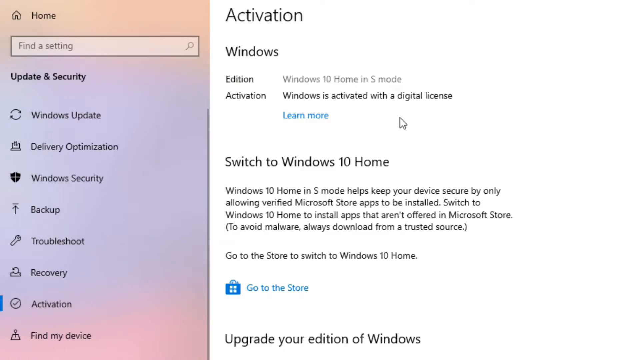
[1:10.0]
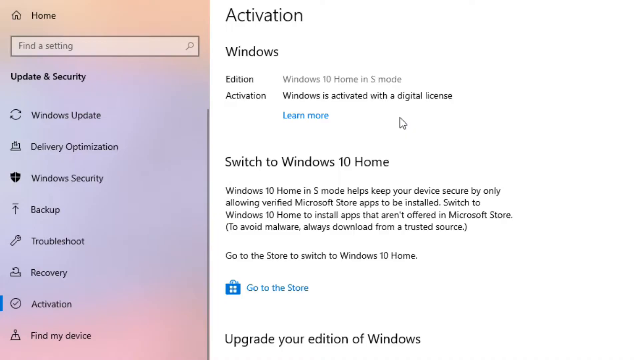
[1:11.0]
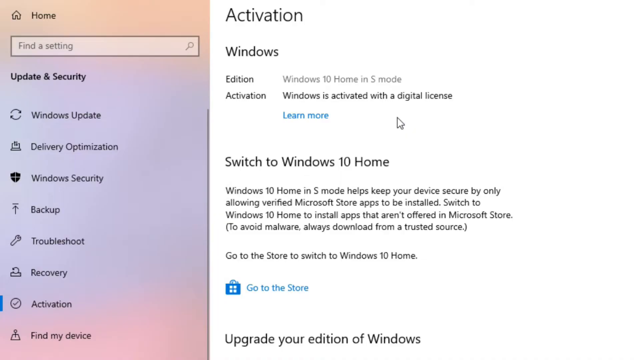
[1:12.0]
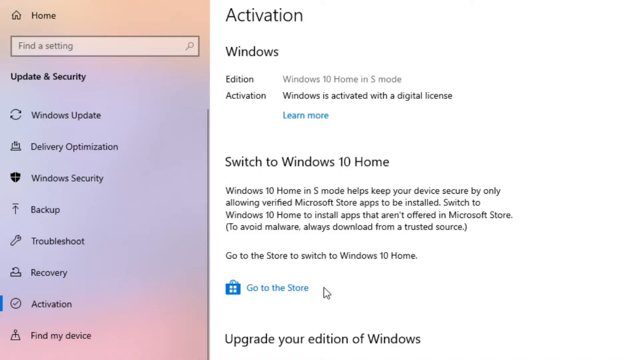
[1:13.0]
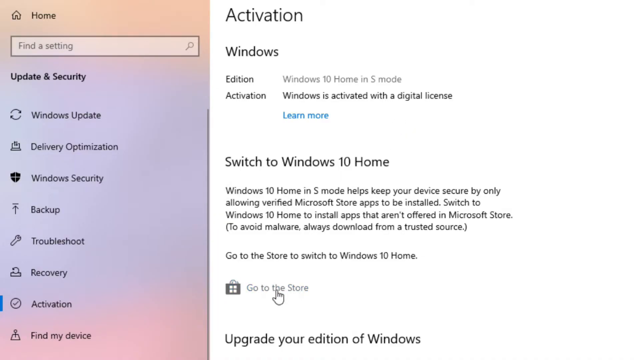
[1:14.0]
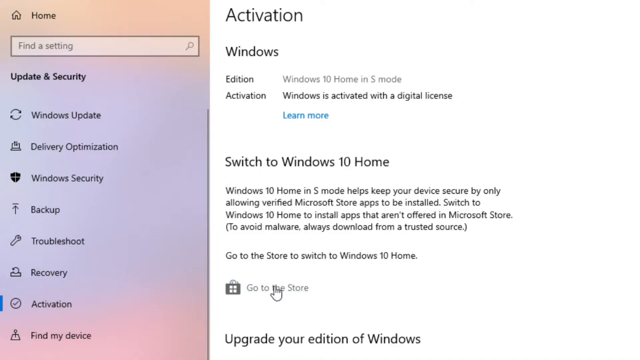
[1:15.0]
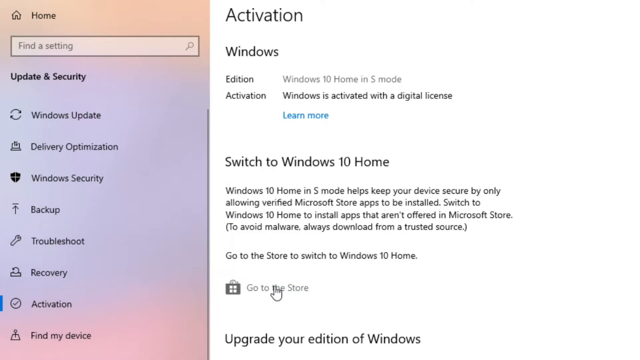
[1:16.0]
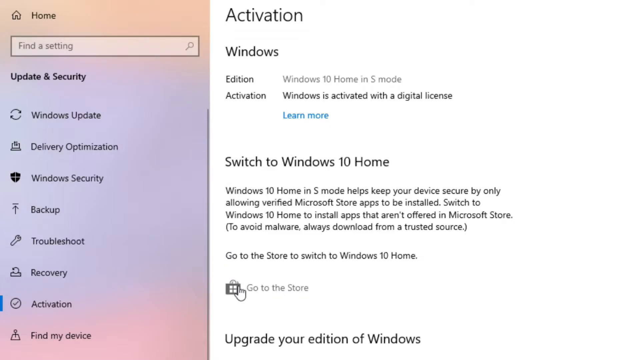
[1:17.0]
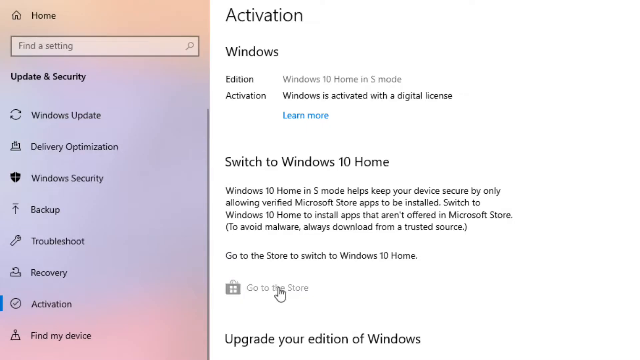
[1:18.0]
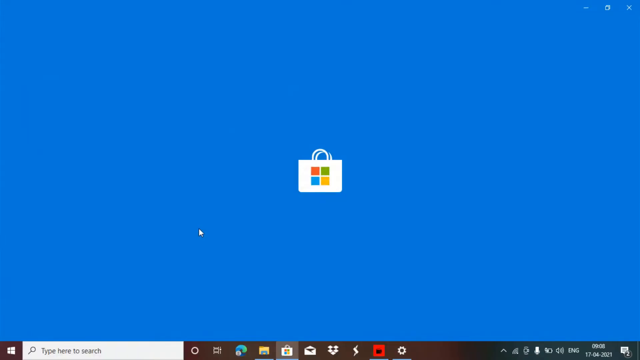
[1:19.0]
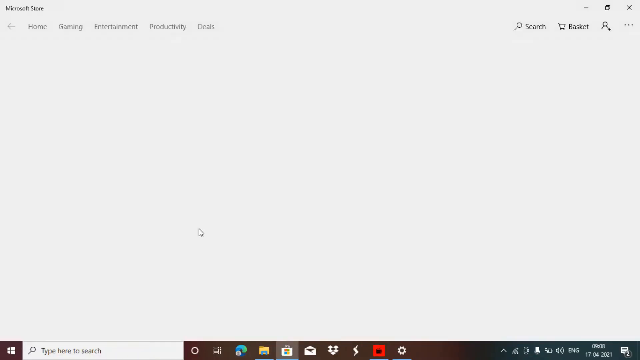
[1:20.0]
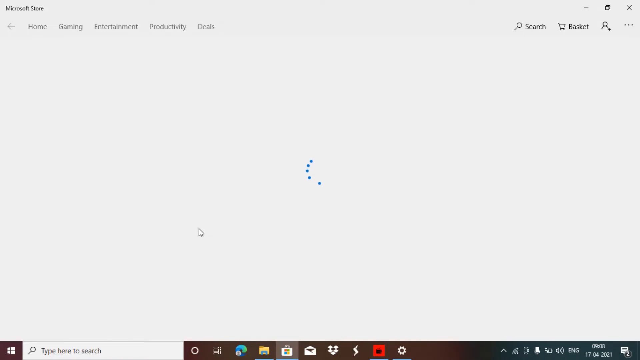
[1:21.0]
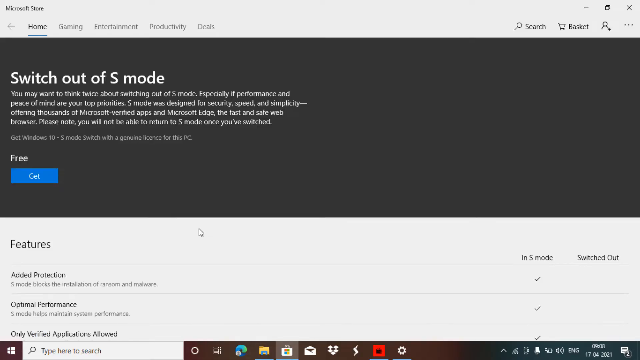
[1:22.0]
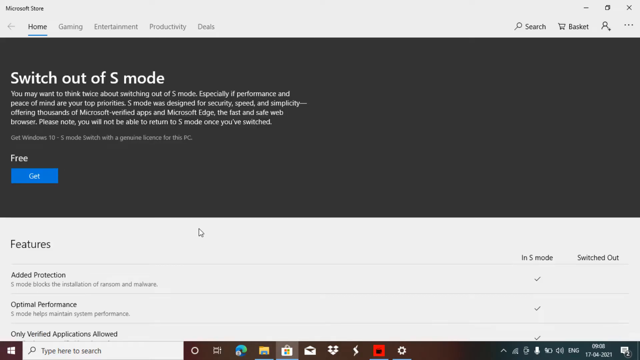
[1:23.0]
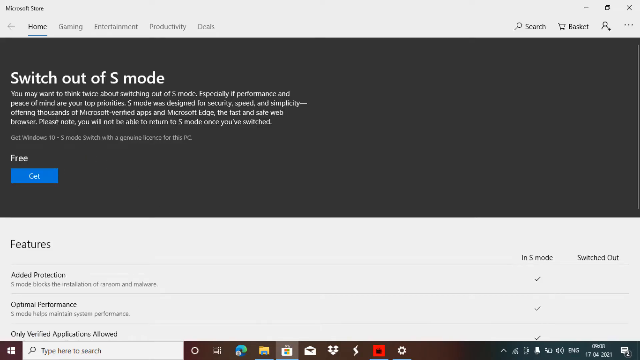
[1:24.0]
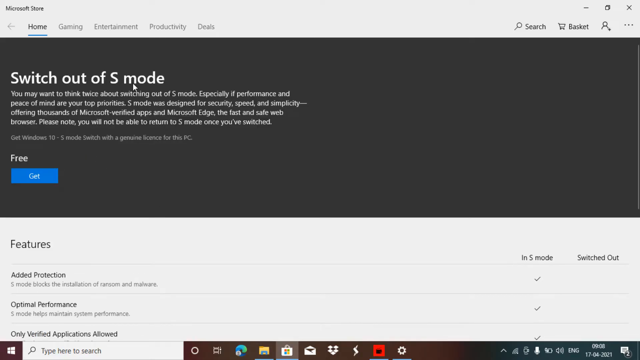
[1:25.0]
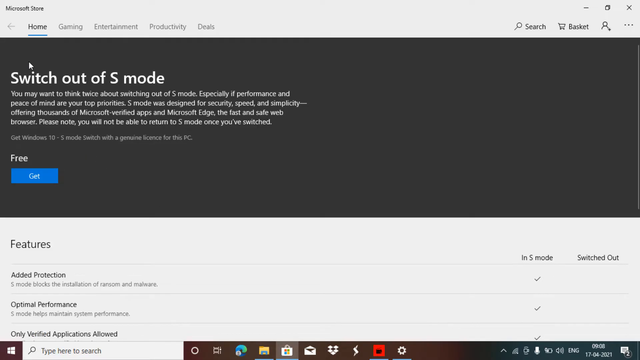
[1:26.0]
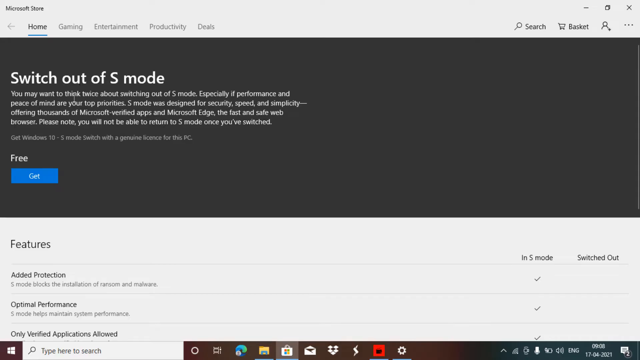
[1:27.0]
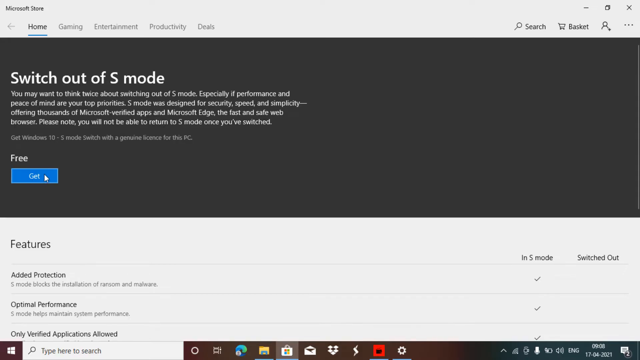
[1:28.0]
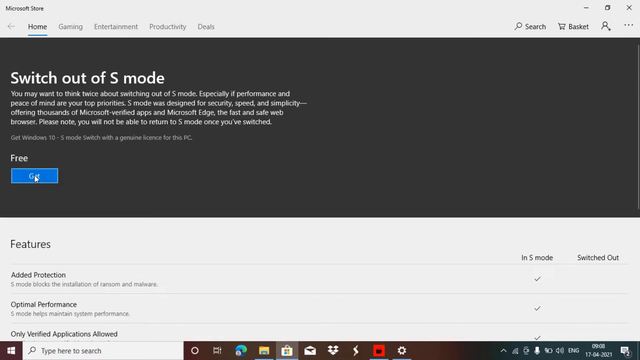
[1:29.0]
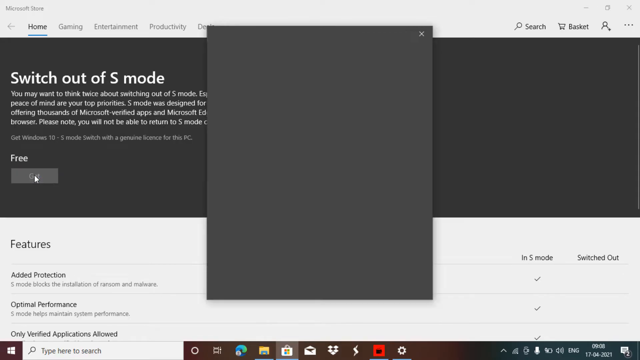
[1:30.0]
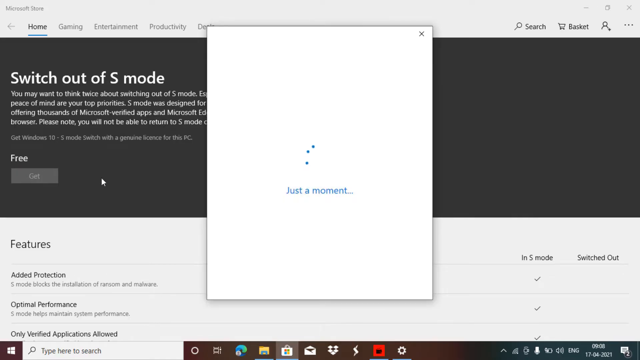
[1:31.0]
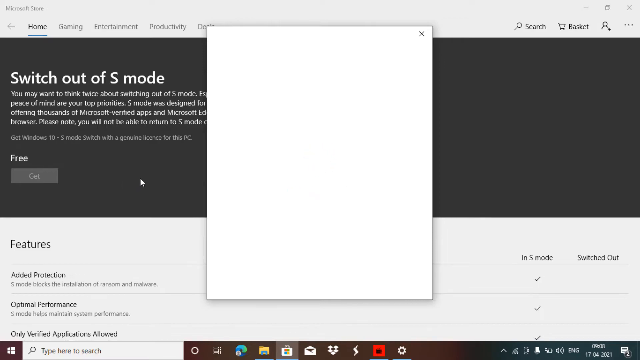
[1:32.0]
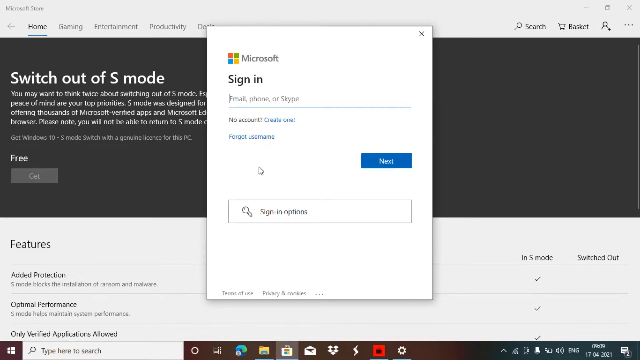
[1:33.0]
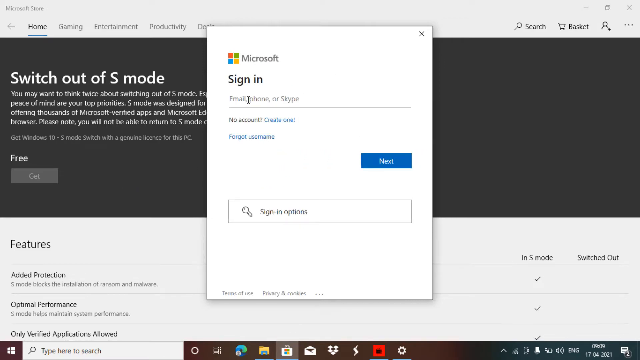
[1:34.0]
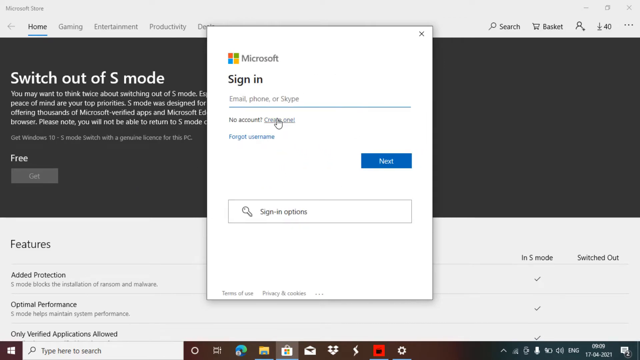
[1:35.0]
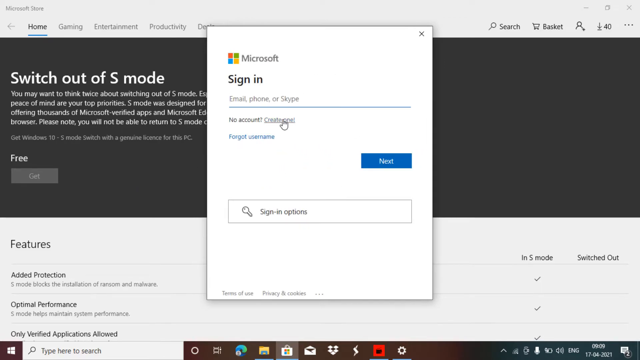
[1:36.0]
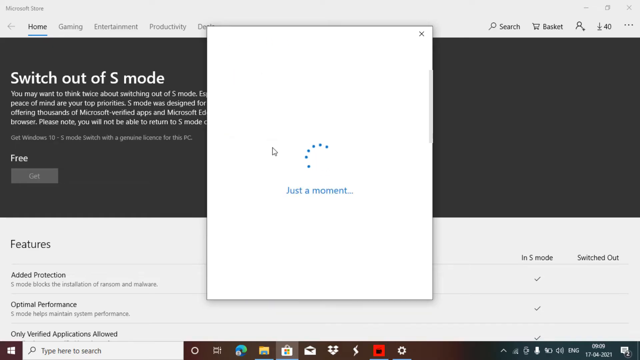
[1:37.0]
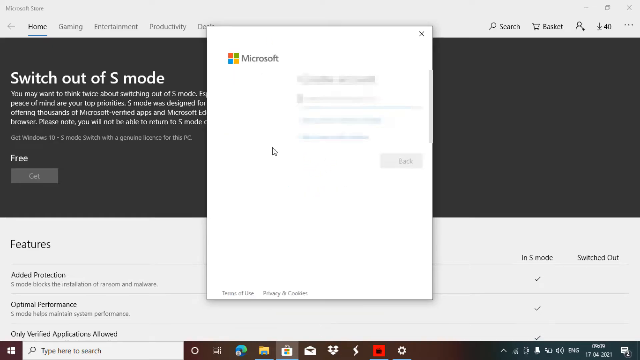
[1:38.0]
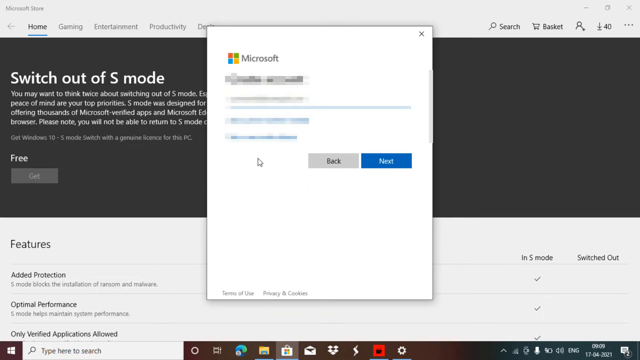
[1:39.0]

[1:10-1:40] The mouse moves to a blue button below that says "go to the store", next to the Microsoft Store logo, a shopping bag with the Windows logo, and clicks it. The Microsoft Store opens with a pop-up on a blue background showing a white shopping bag with the Windows logo centered on it and a loading circle icon below. Then a dark gray block filling half the page says "switch out of S mode" in white font, along with a lot of text, apparently including "It's free", and a Get button. After Get is clicked, a pop-up window asks the user to sign in with an email or create one. The person enters their credentials, and the entire pop-up window is blurred out.